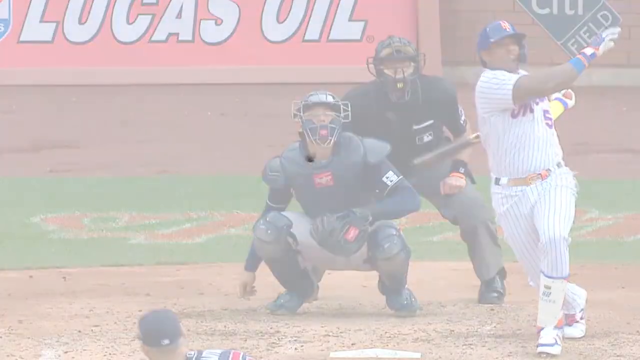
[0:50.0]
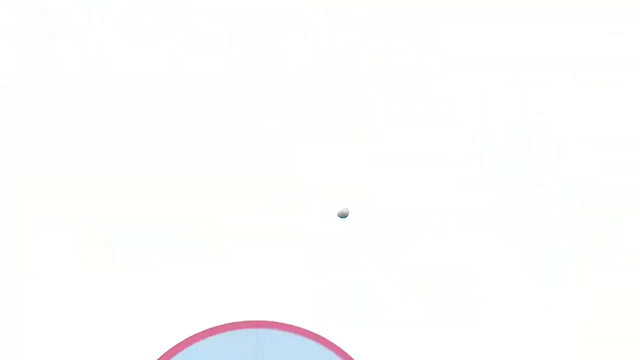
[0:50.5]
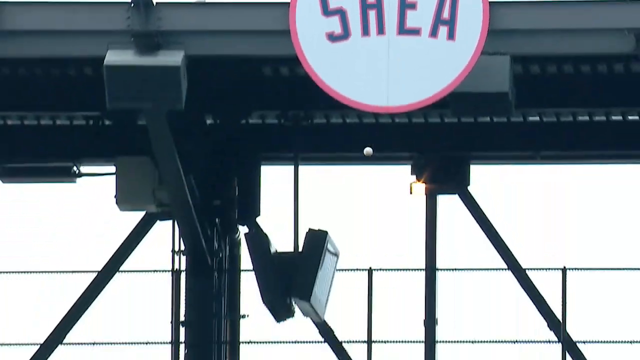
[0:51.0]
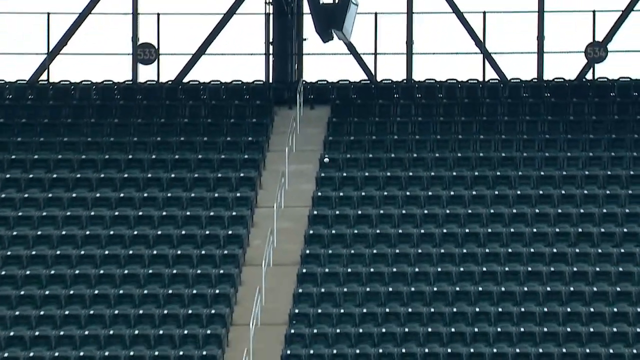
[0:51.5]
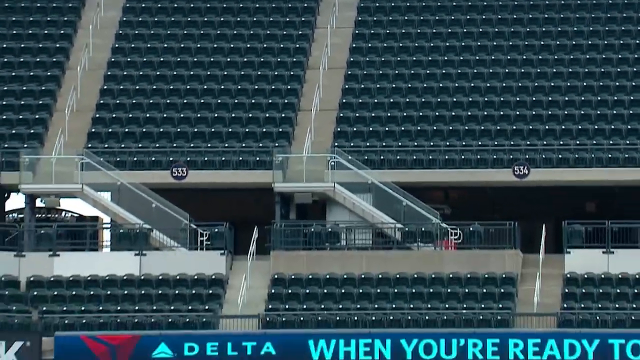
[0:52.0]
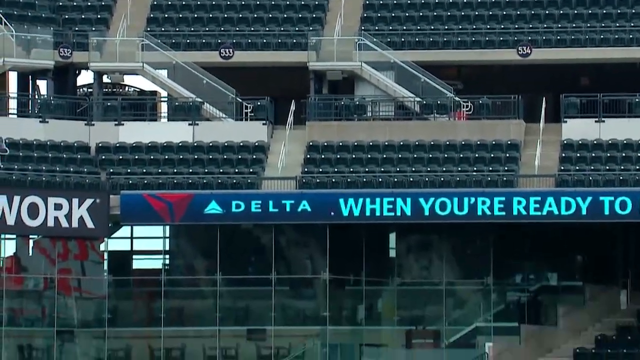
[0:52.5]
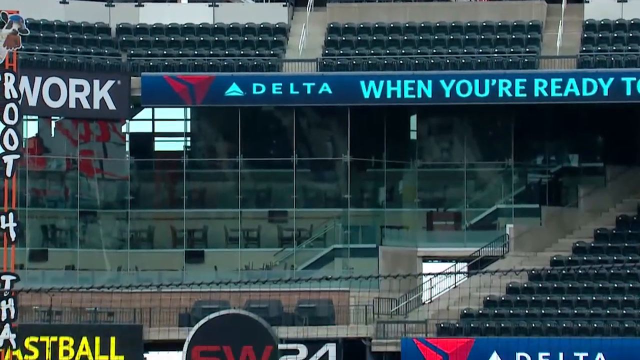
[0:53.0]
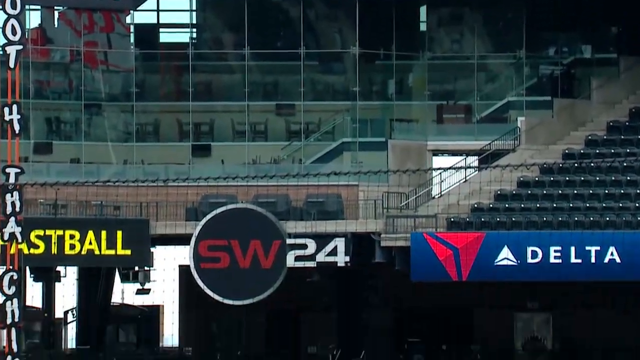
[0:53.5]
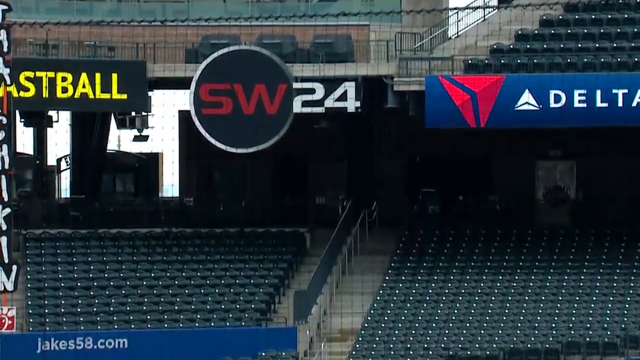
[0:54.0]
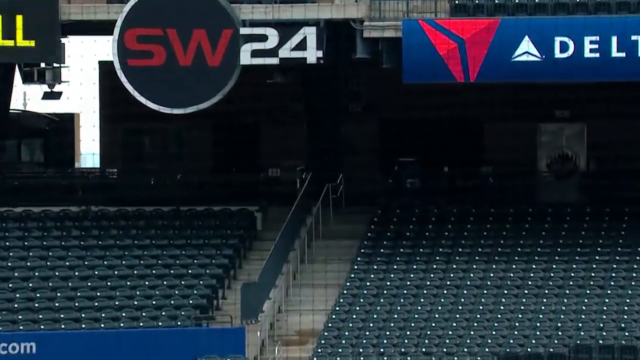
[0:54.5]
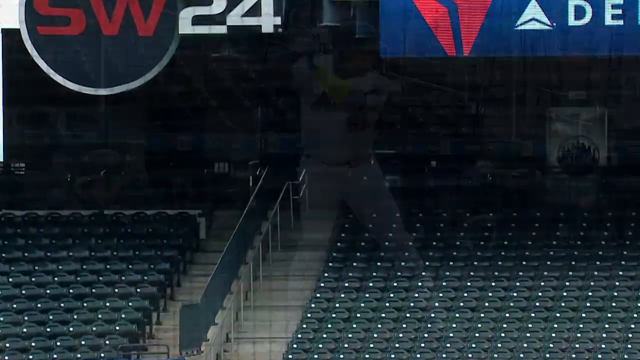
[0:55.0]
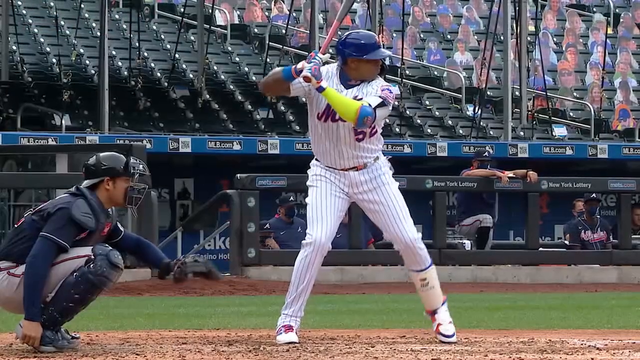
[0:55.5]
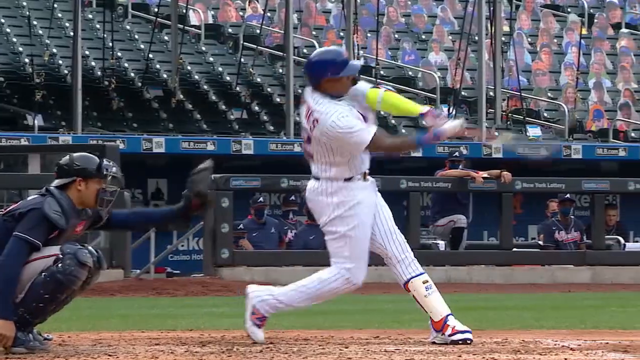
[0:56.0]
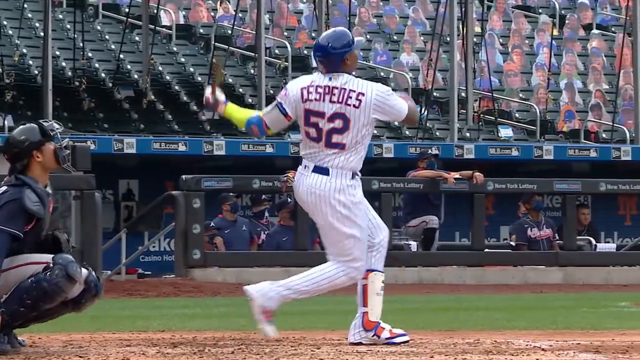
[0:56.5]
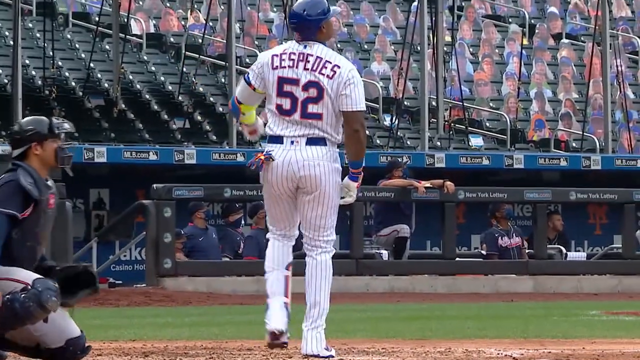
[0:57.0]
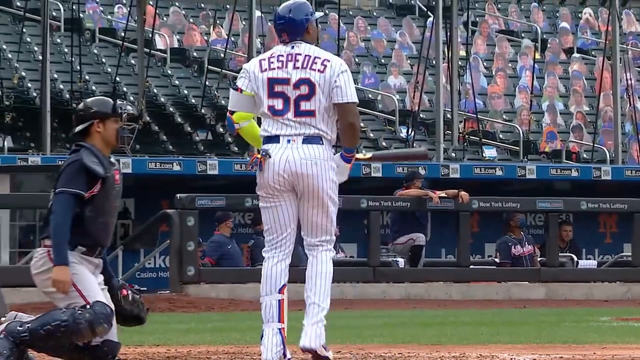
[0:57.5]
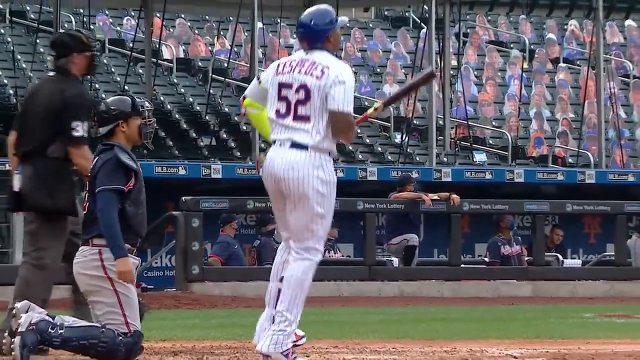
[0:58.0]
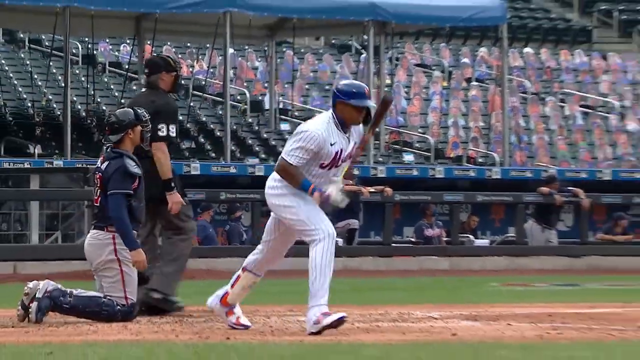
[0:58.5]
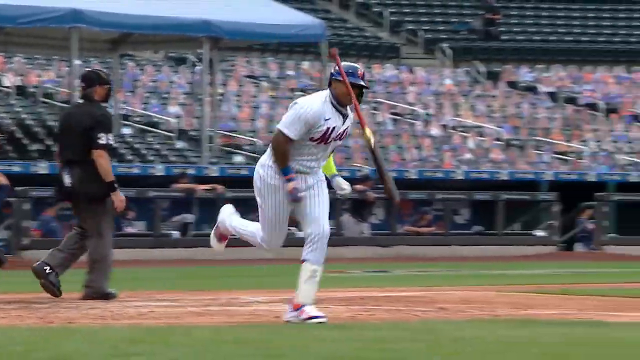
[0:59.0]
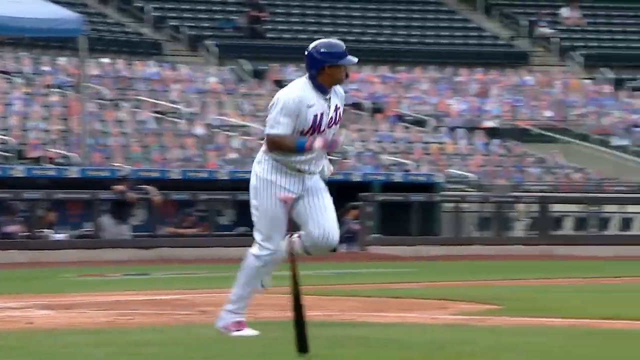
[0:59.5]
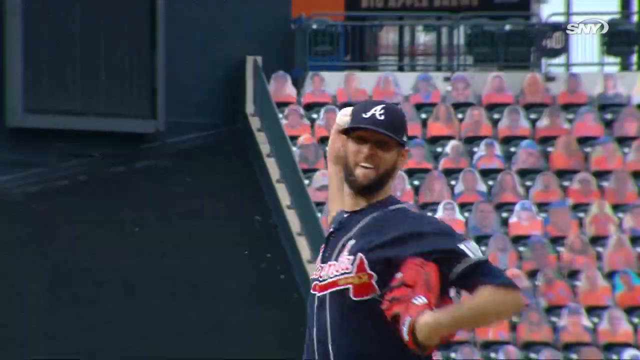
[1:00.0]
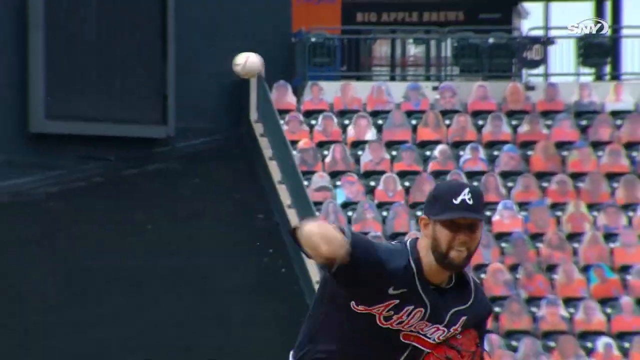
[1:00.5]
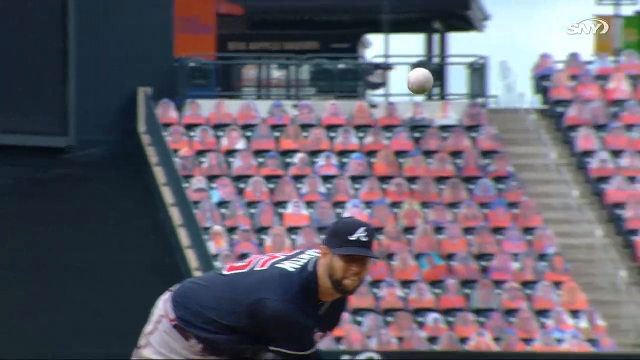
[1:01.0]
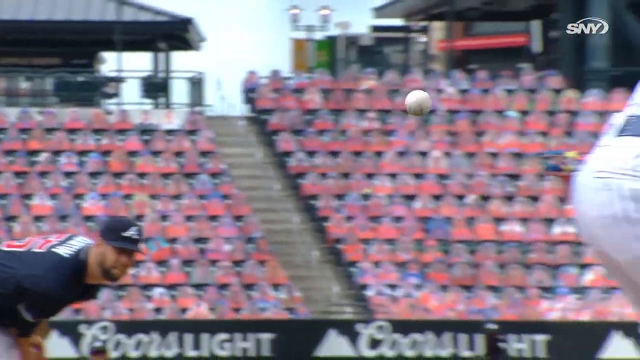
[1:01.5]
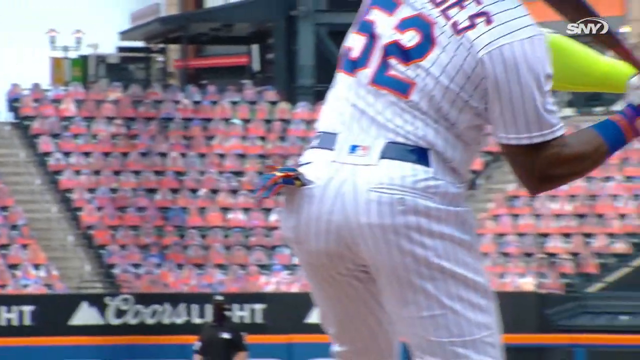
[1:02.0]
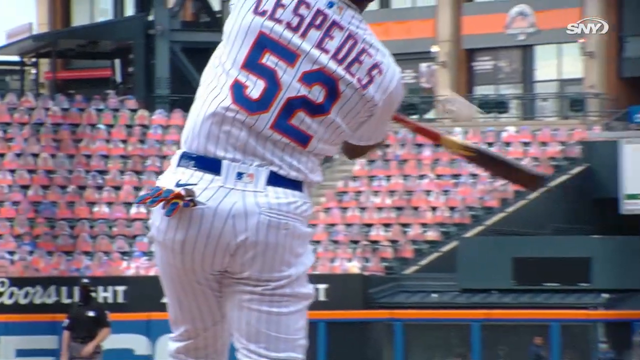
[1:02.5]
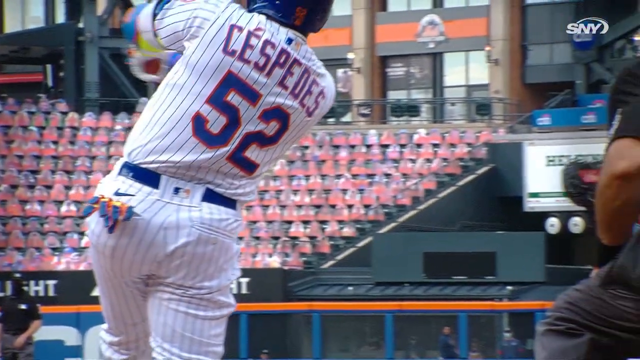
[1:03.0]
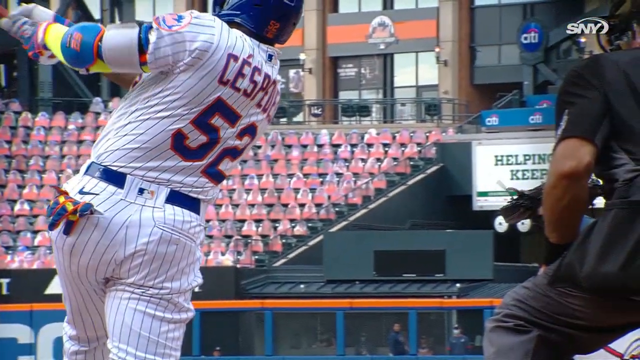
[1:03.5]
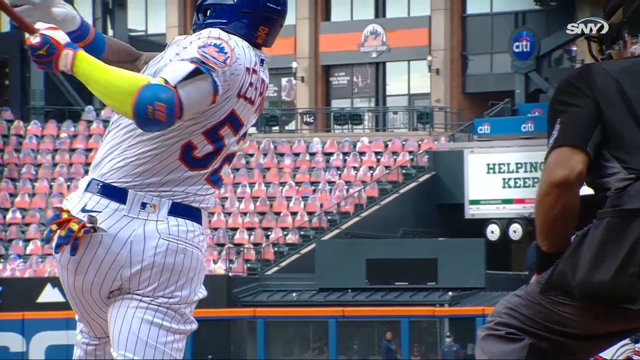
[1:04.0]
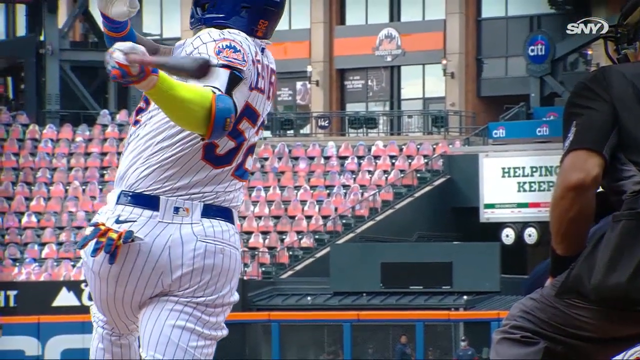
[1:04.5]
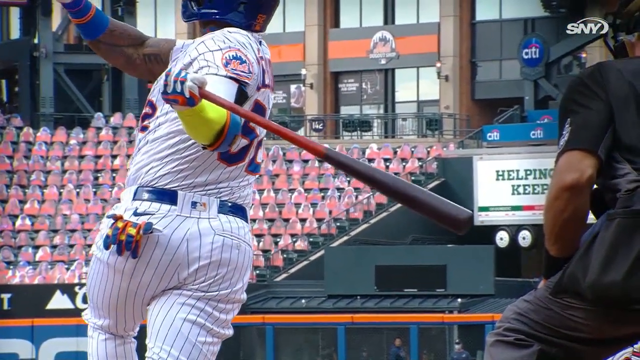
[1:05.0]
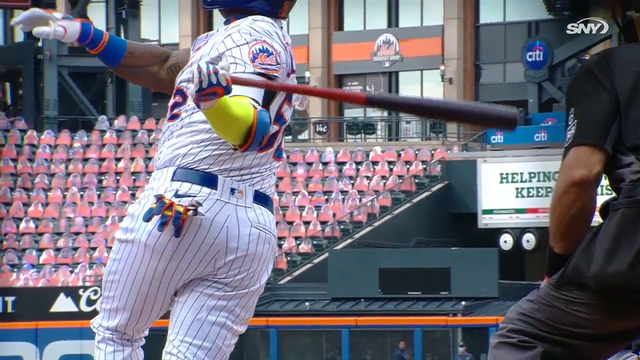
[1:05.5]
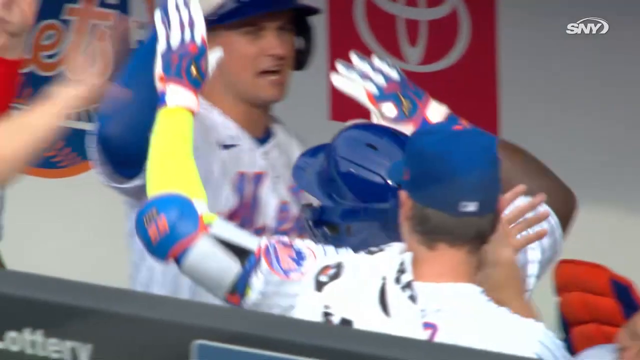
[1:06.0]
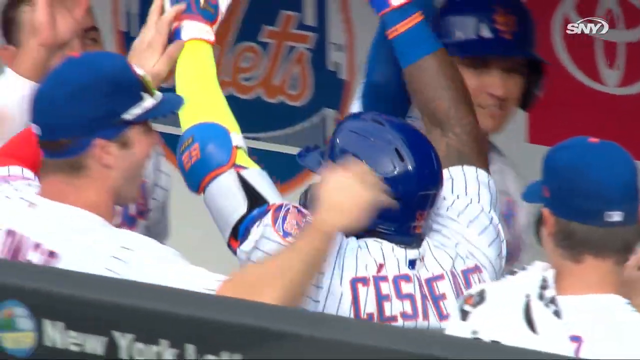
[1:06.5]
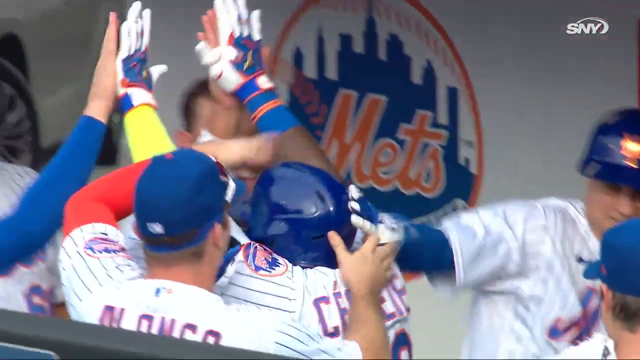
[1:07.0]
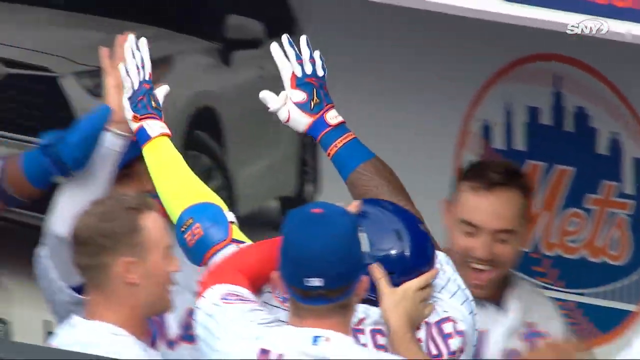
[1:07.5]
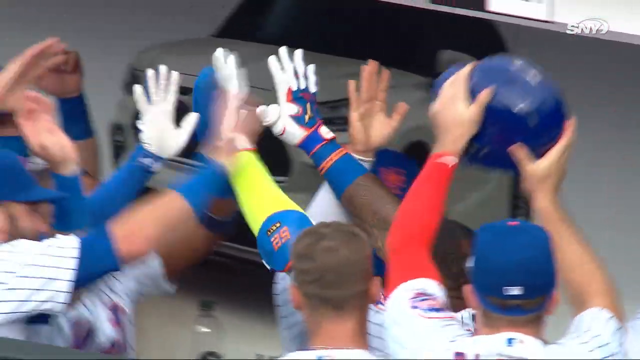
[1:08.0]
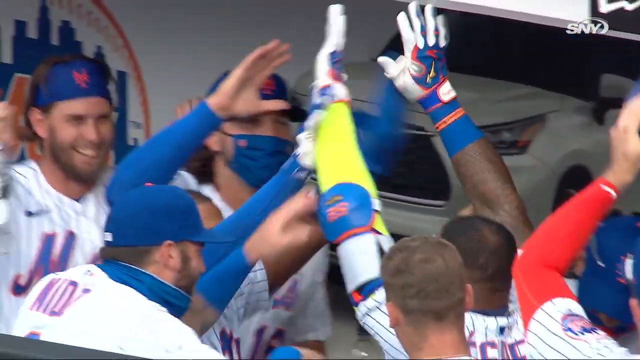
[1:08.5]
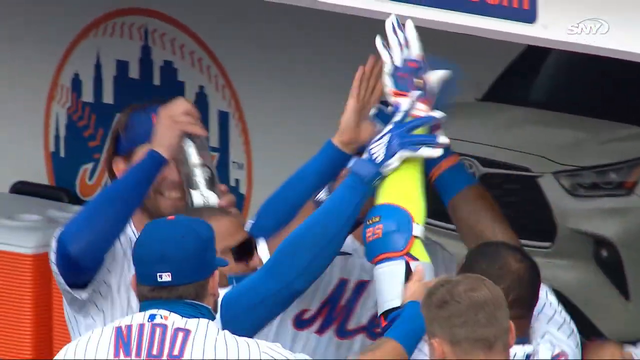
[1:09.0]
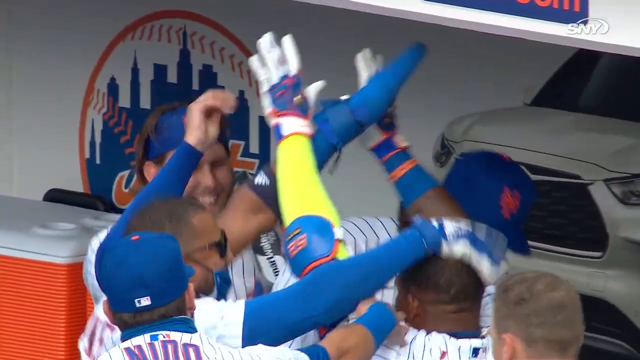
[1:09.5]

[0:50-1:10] A slow-motion replay follows the ball, which looks to land in the bottom deck of left field. Another replay shows a close-up of the swing from the Mets side, with some players visible in the dugout: about six of them sit watching, and it looks like five of them wear face masks, as it is the COVID season. Cespedes takes a hard swing, stands and watches the ball for a brief moment, then flips the bat to his right and starts to run. Another close-up from behind shows Cespedes hitting the ball, with a batting glove in his left back pocket and a blue belt on his pinstriped Nike pants; the Mets are wearing their white uniforms. A shot then shows Cespedes in the dugout with both arms raised, giving and receiving high fives; one player taps him on the helmet and another takes his helmet off as he continues down the line, giving more players high fives while the rest of the team celebrates with him.